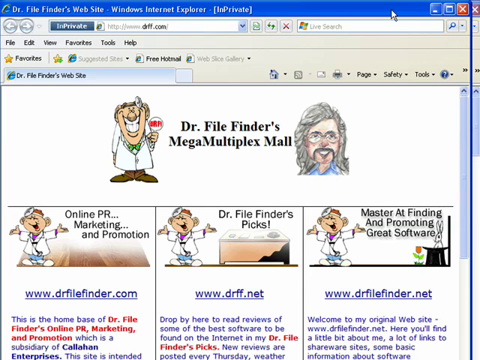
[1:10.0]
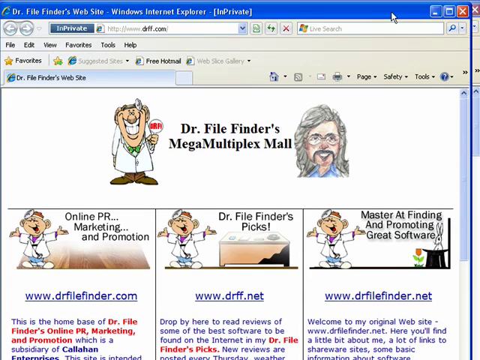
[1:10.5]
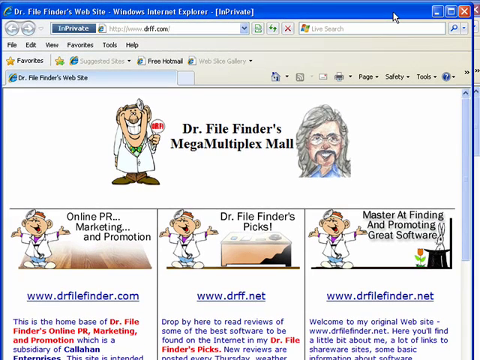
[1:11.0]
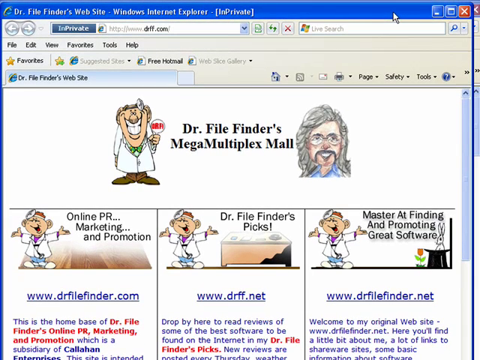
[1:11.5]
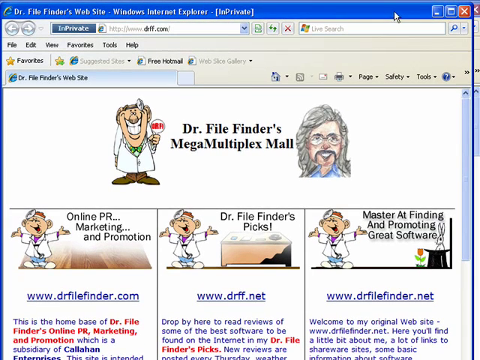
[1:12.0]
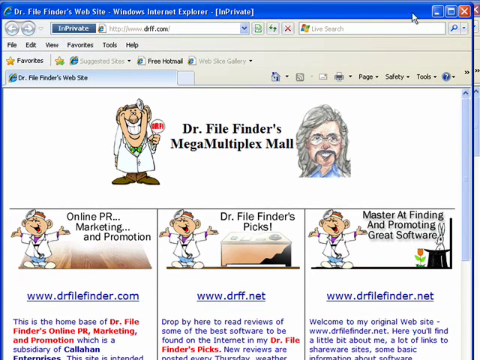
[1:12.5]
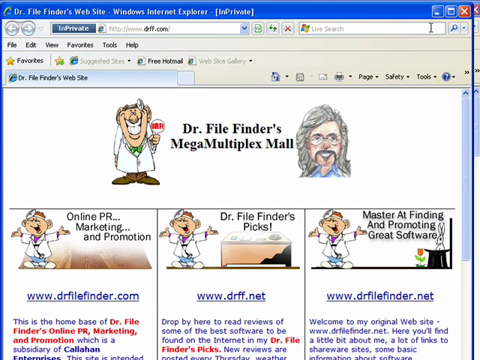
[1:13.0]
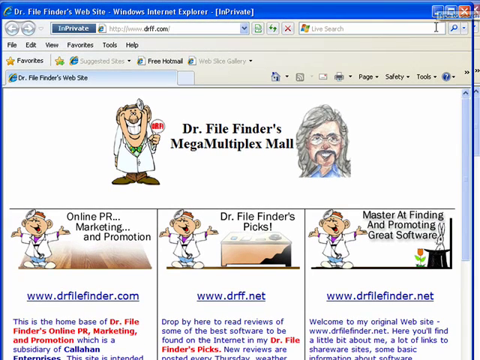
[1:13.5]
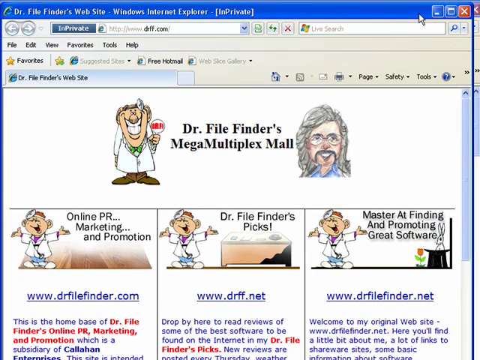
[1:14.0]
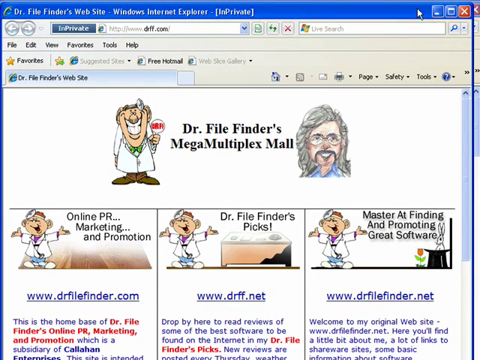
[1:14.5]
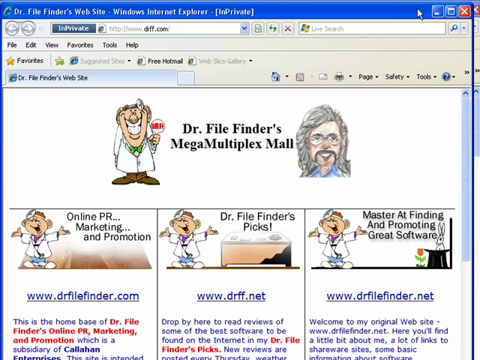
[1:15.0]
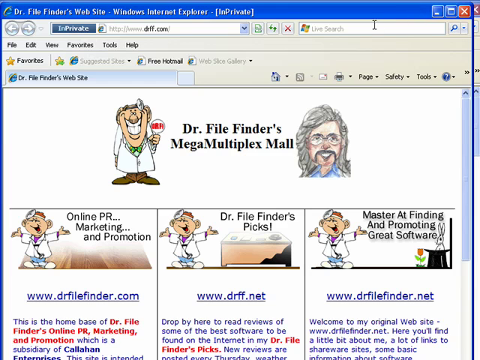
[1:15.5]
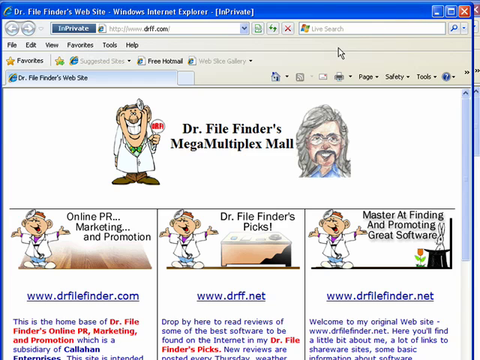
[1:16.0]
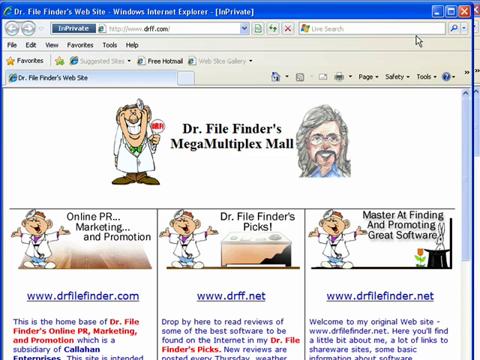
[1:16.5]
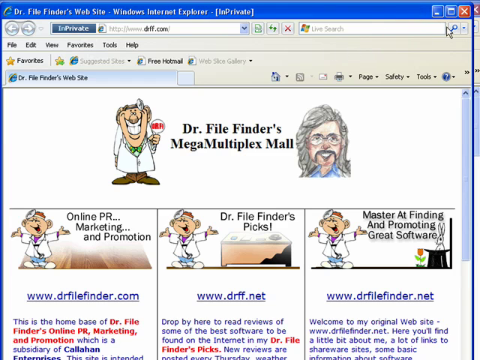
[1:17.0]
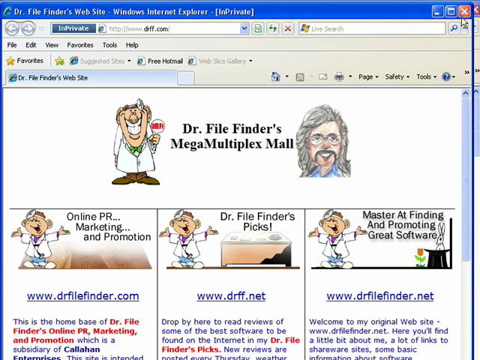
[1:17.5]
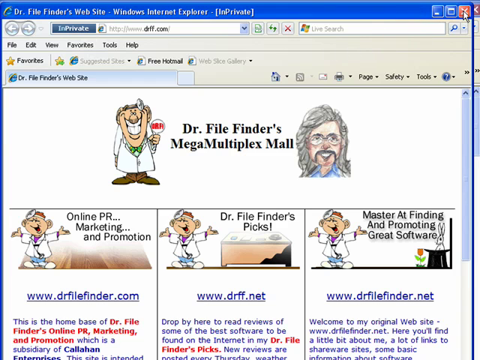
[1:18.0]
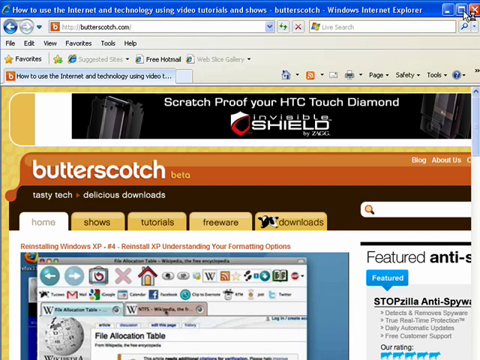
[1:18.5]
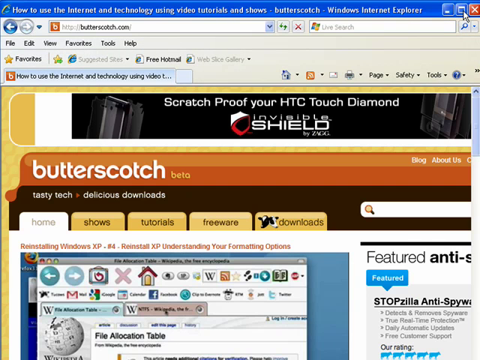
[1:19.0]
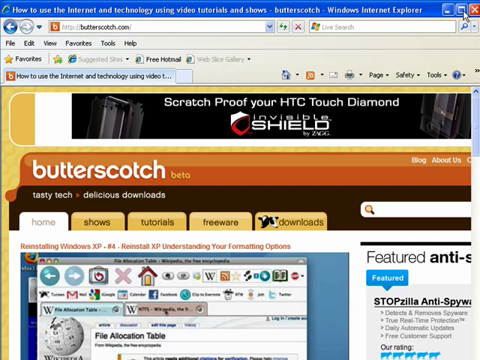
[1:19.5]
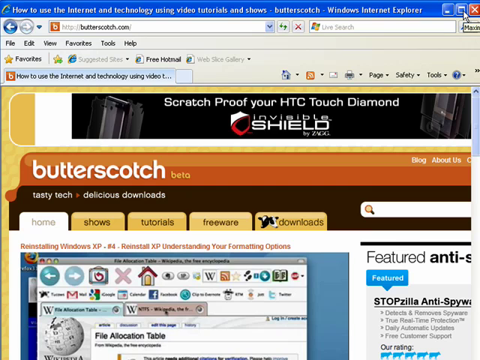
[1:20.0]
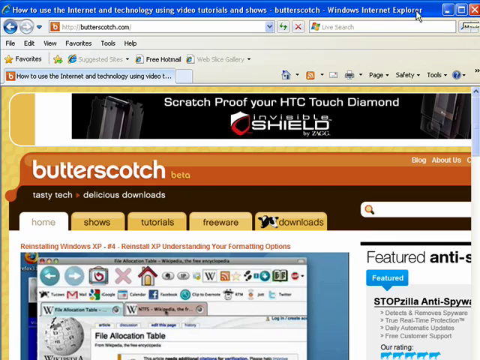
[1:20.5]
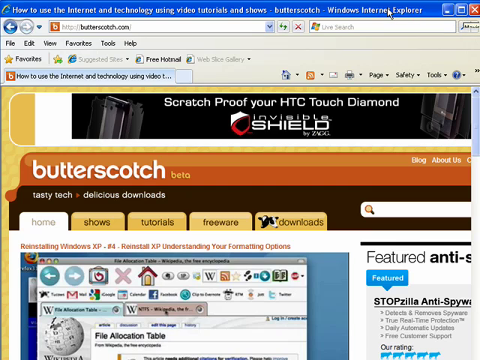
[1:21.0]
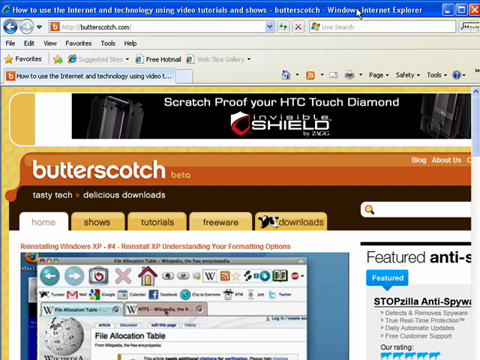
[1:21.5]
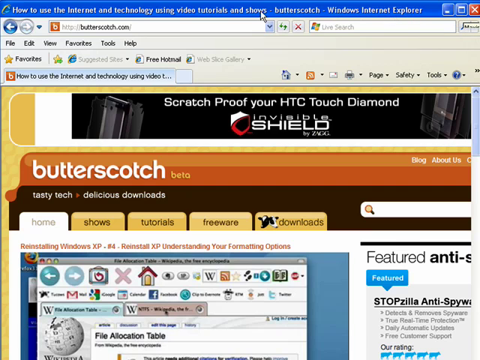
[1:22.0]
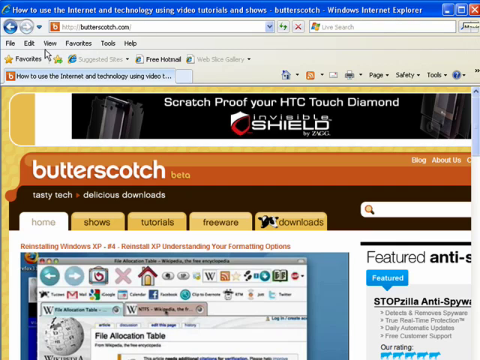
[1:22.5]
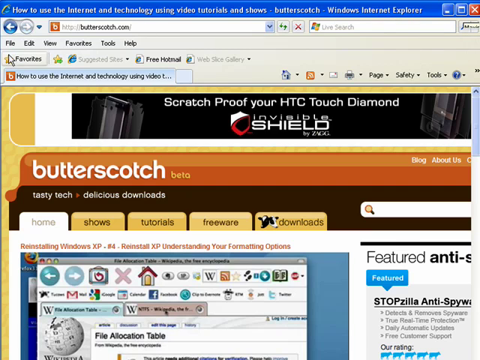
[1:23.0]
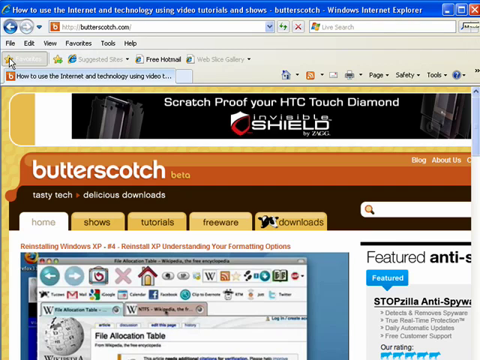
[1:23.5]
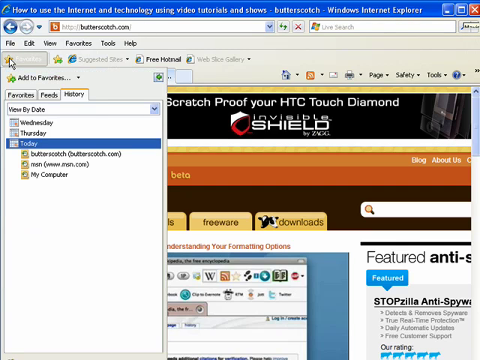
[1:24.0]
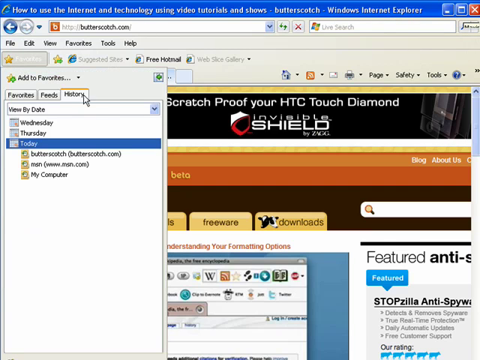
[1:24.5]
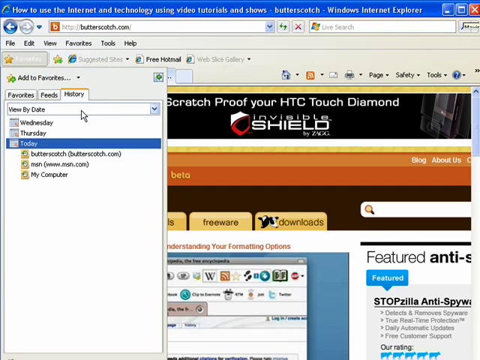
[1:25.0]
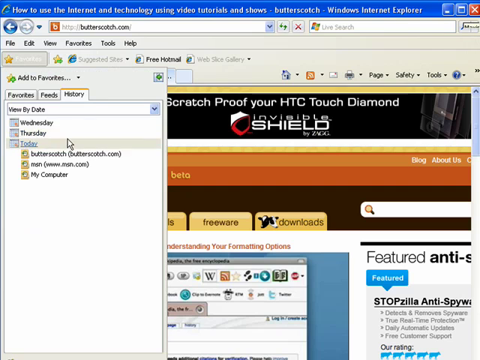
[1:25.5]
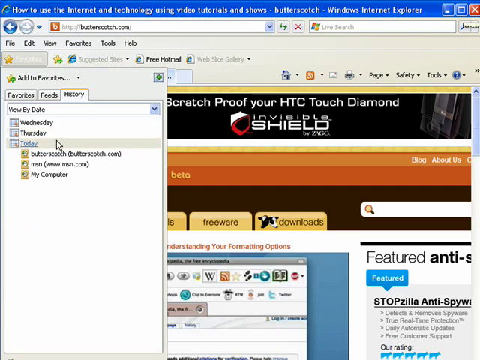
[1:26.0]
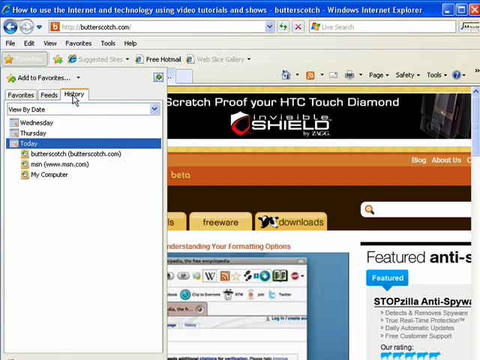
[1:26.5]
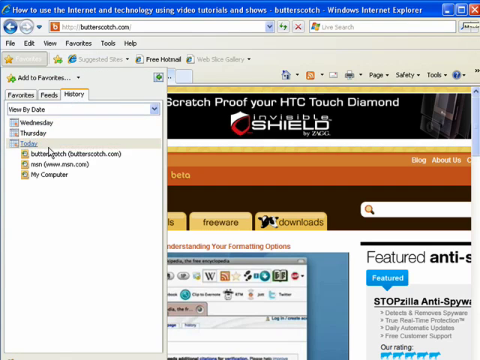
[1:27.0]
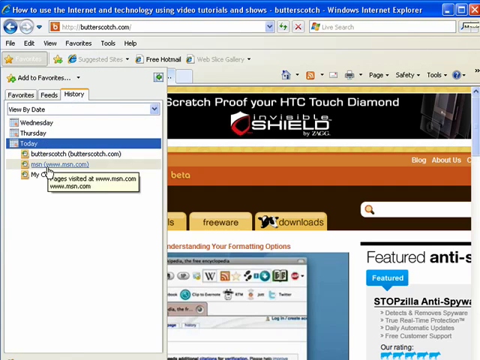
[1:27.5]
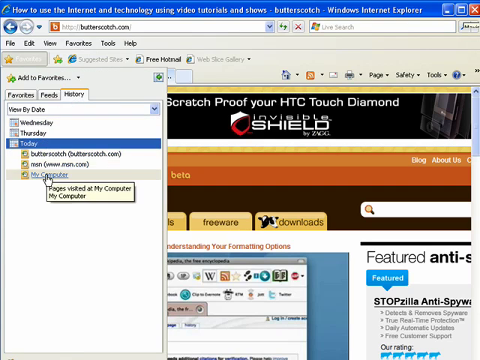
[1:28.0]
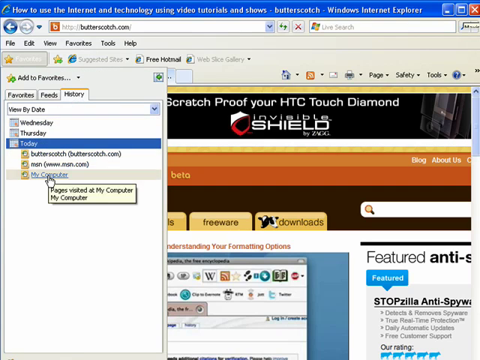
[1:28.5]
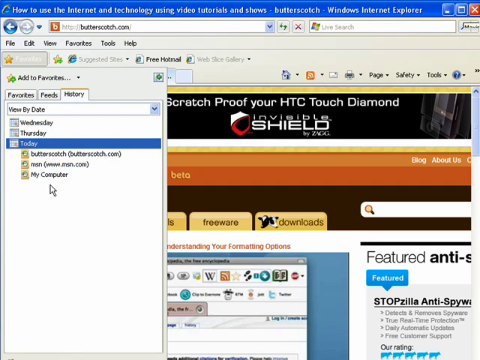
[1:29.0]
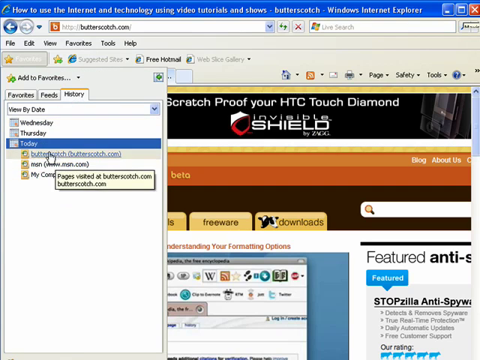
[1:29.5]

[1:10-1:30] The browser is on drff.com, with the header "Dr. File Finder's mega-multiplex mall." The cursor moves around and exits the InPrivate browsing session by clicking the X on that window. This brings back the butterscotch.com video tutorial website in the regular Internet Explorer browser, which had been open behind the InPrivate window. The cursor then goes over to favorites and down to "today," showing the history, where the drff.com browsing session from the InPrivate window does not appear.